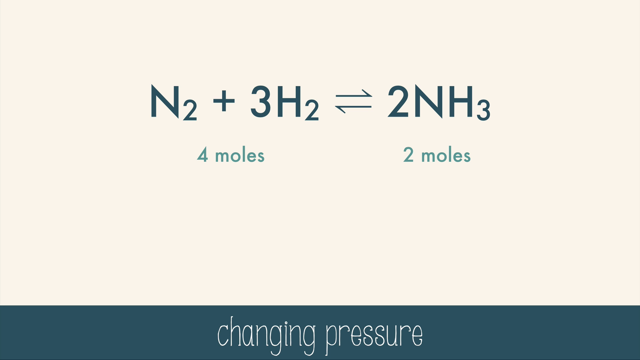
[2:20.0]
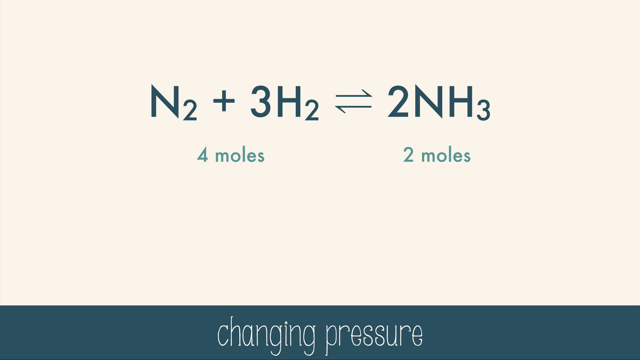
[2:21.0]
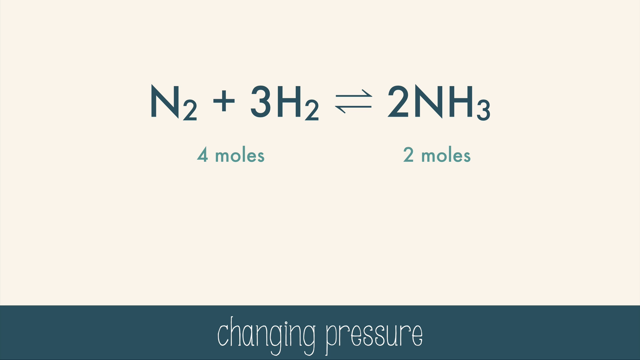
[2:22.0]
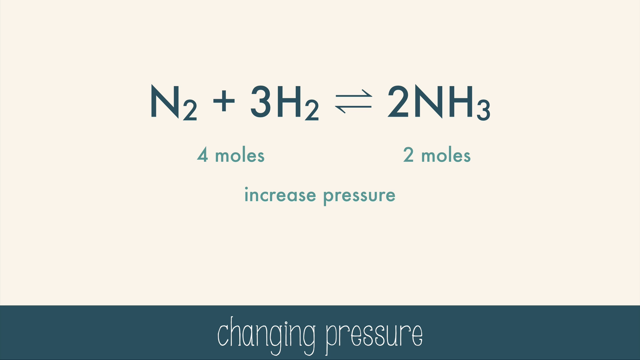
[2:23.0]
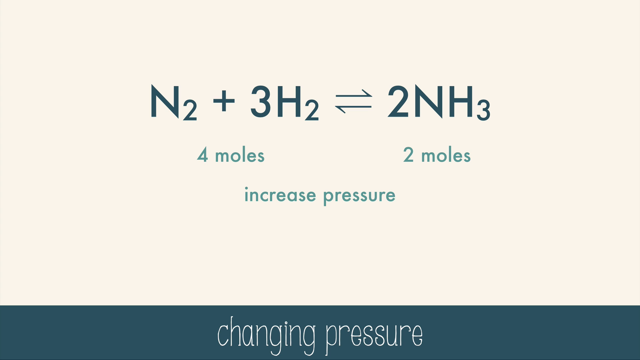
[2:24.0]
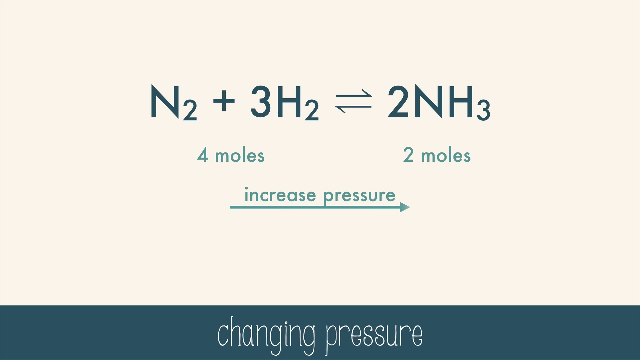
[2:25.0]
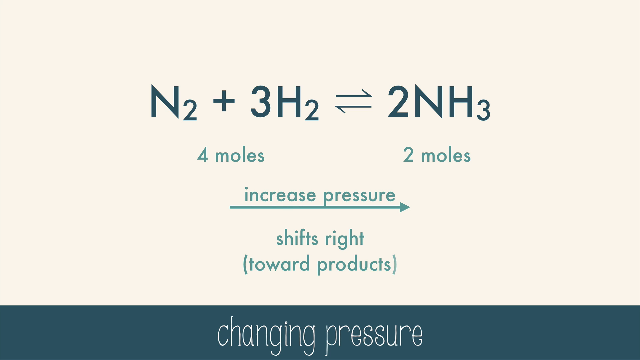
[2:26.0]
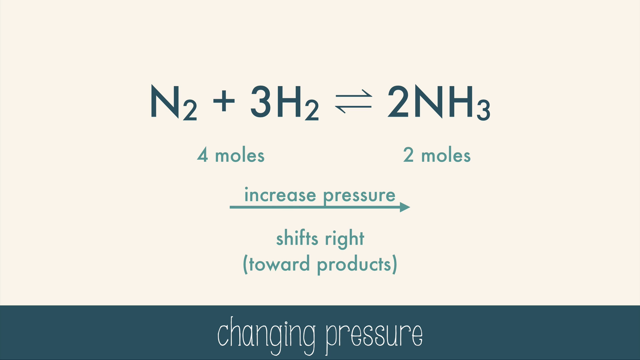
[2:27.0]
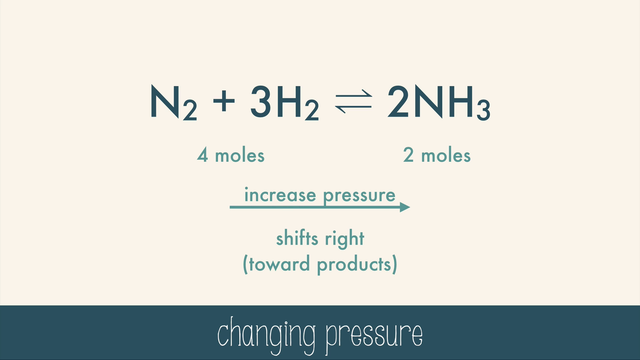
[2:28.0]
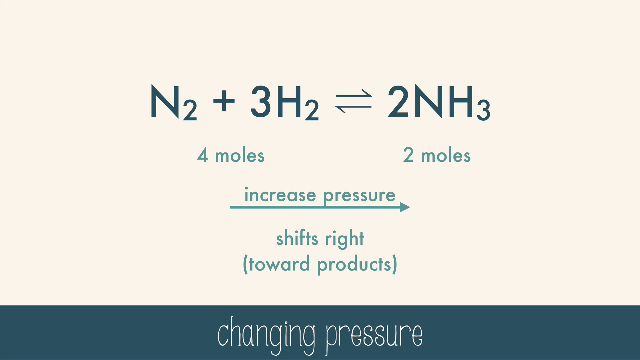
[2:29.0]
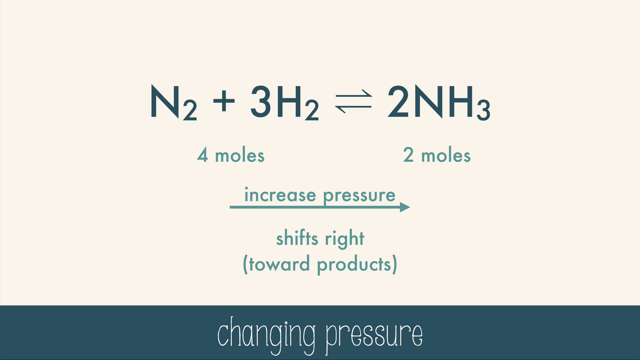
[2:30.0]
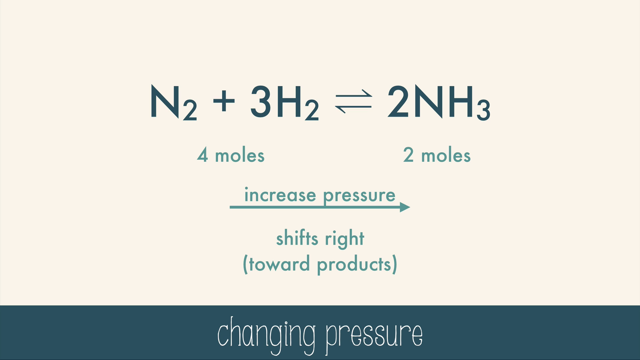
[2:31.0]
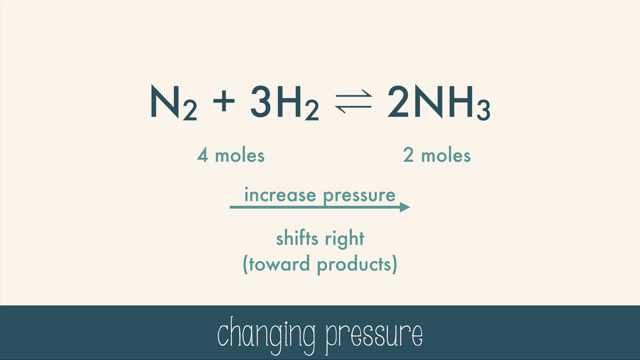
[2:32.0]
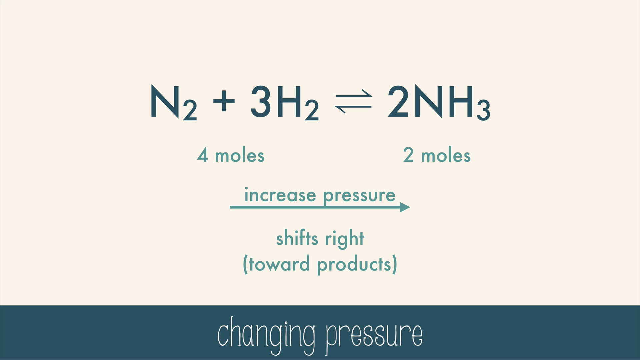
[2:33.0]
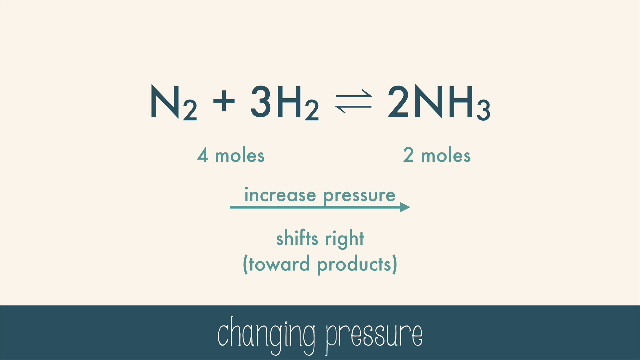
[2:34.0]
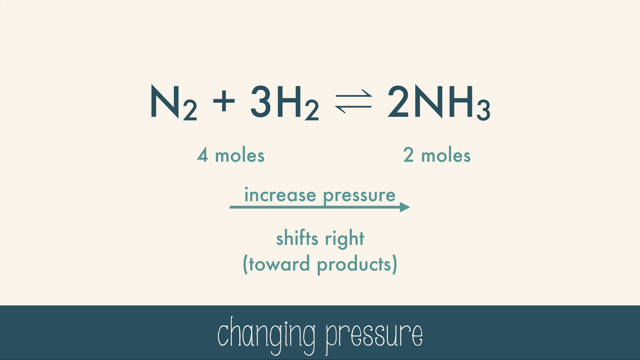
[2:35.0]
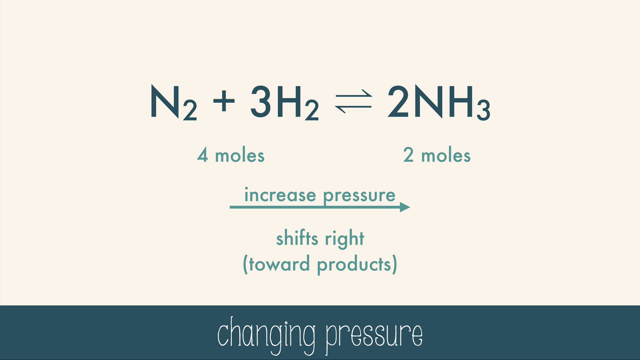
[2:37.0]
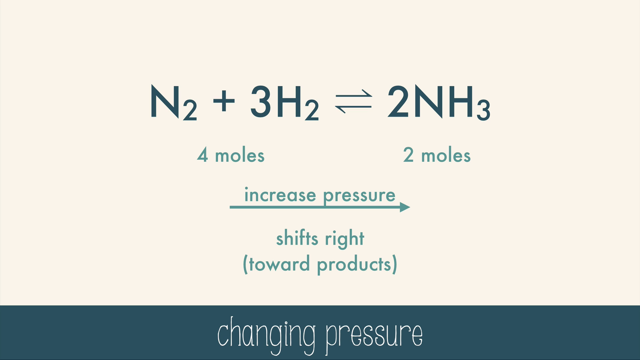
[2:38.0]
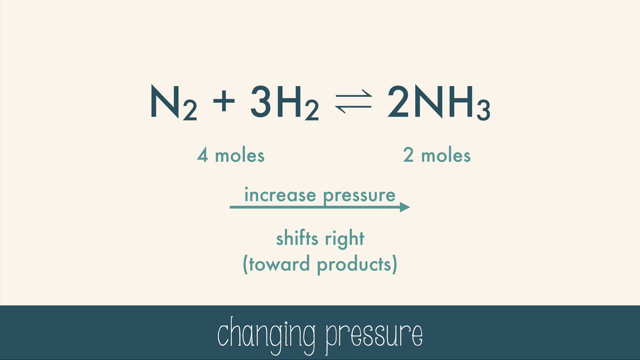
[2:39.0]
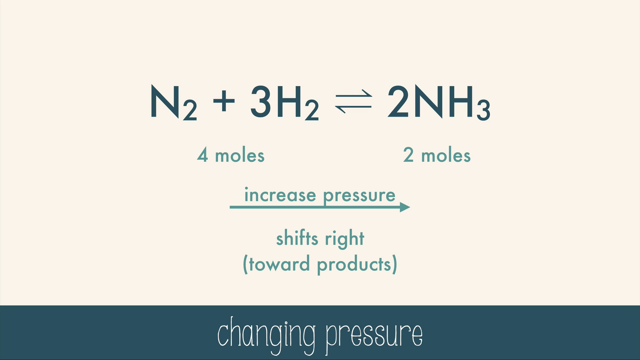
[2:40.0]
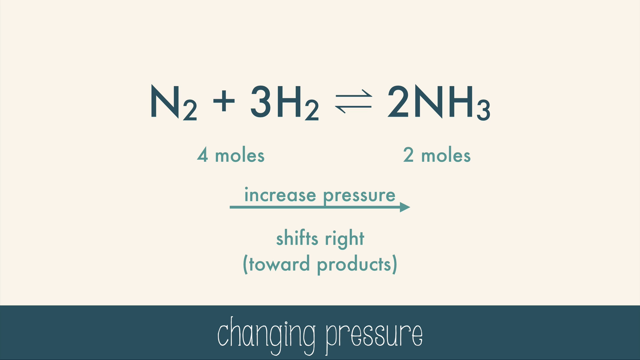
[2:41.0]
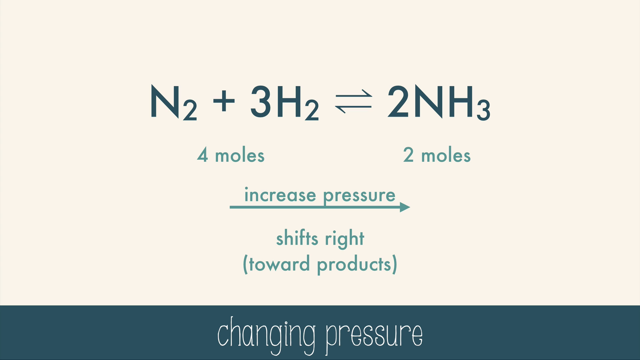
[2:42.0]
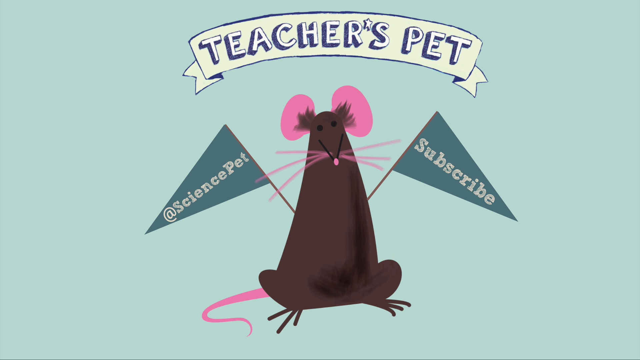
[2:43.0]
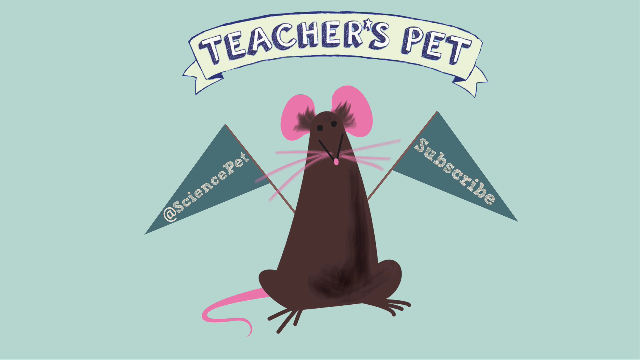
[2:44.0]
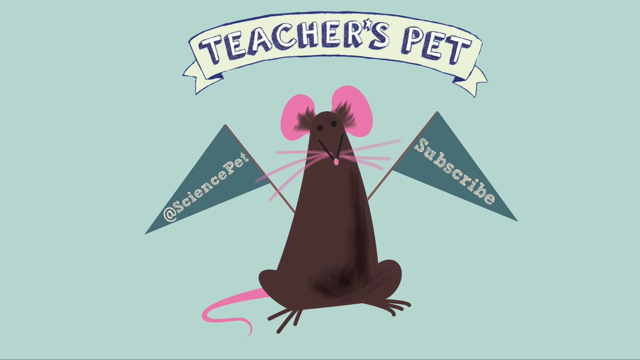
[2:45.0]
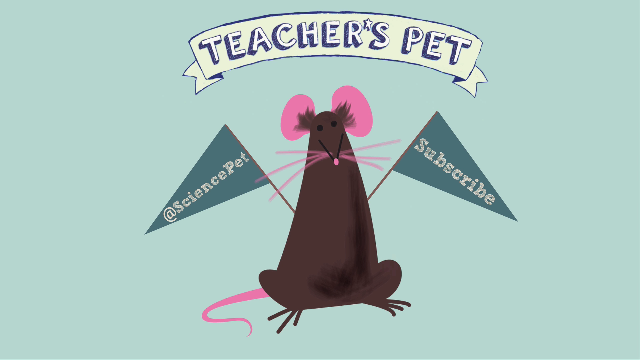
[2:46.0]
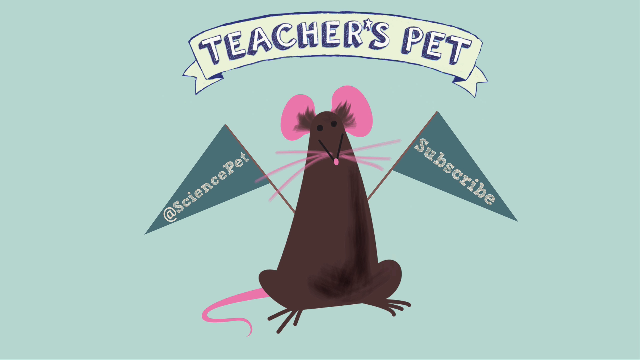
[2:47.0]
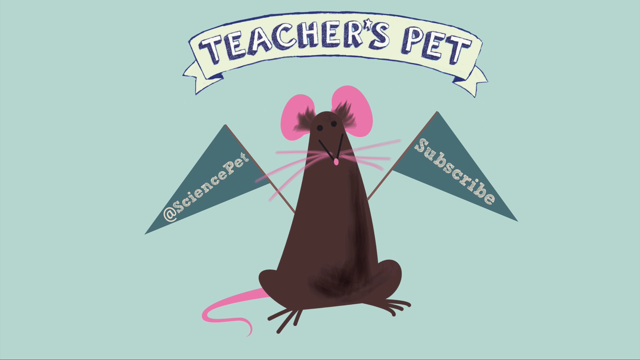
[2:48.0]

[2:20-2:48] On a tan background is the equation N2 + 3H2, two lines, and 2NH3, with "four moles" and "two moles" under it in a lighter blue. At the very bottom, a blue banner says "changing pressure". Under the four moles and two moles, more text appears saying "increase pressure", with an arrow pointing to the right below it and, under that, the text "shifts right towards products". The slide stays for several seconds. In the closing, a brown mouse with pink ears and whiskers appears, along with a banner that says "Teacher's Pet", then "Science Pet", and then a flag inviting the viewer to subscribe to the channel.